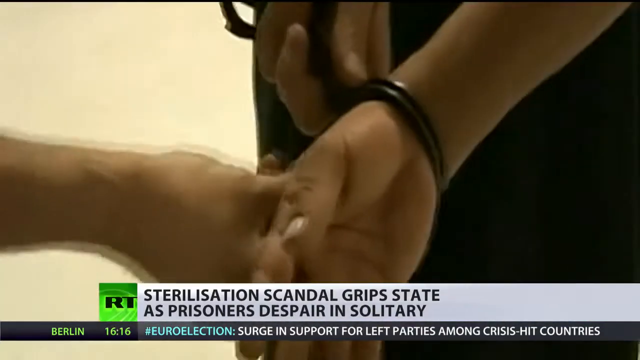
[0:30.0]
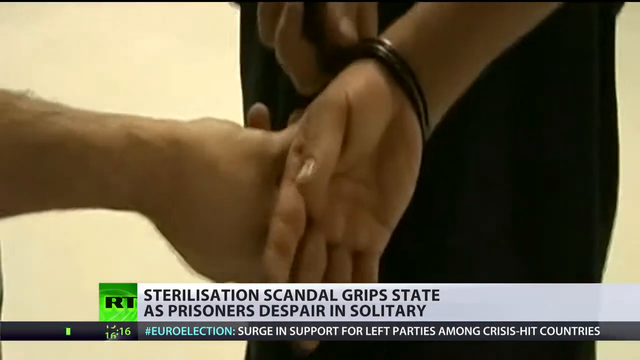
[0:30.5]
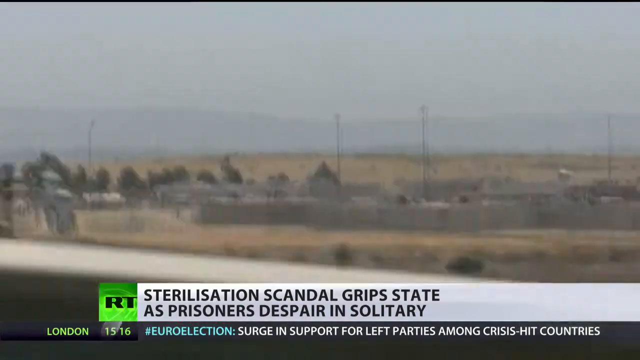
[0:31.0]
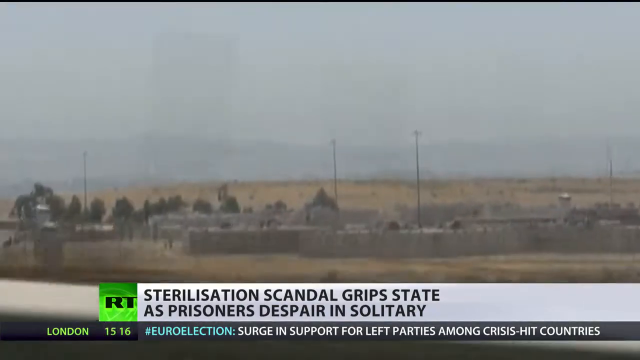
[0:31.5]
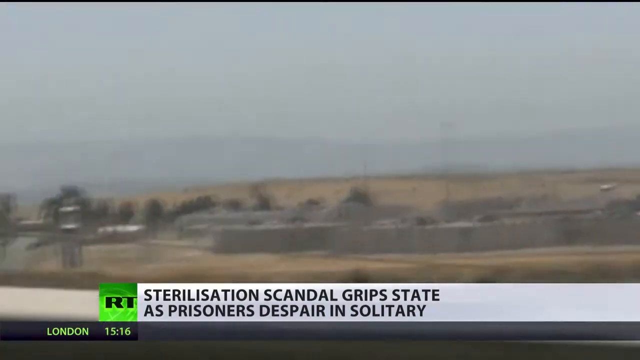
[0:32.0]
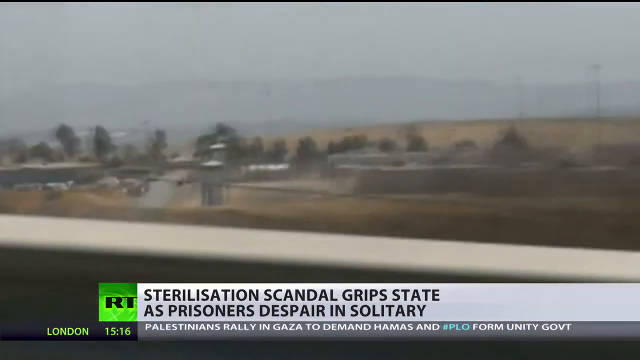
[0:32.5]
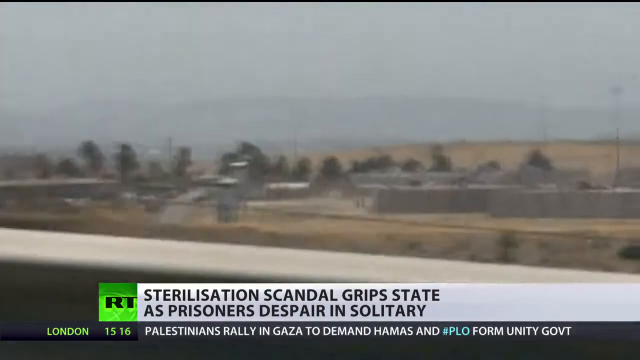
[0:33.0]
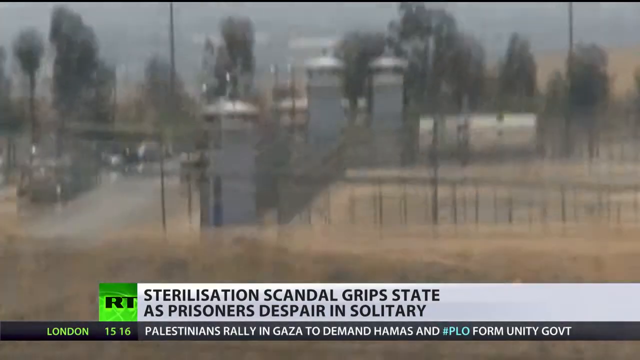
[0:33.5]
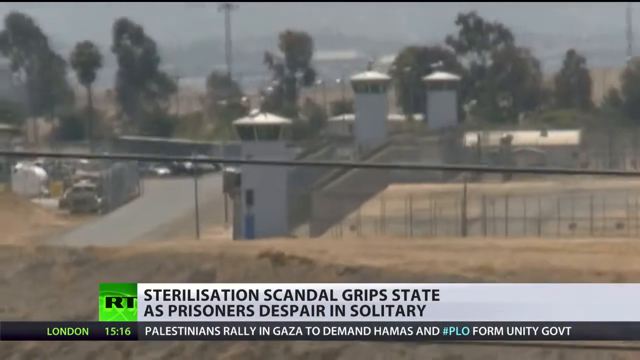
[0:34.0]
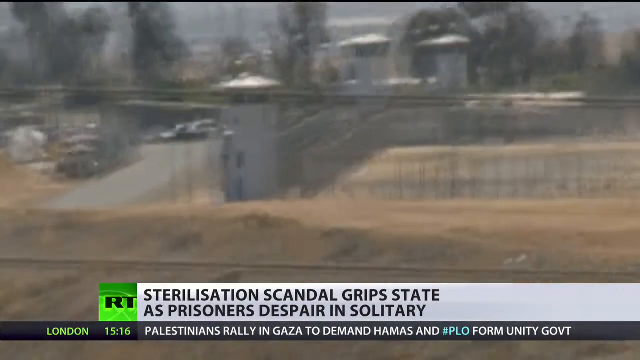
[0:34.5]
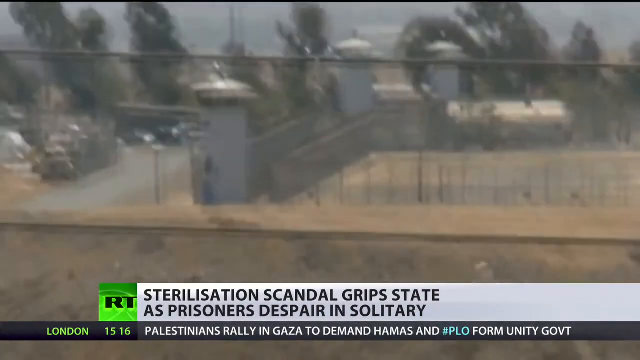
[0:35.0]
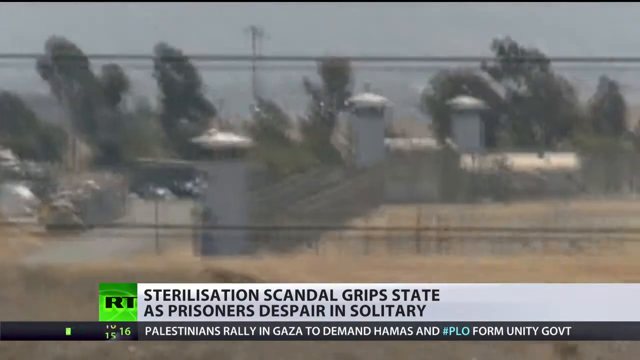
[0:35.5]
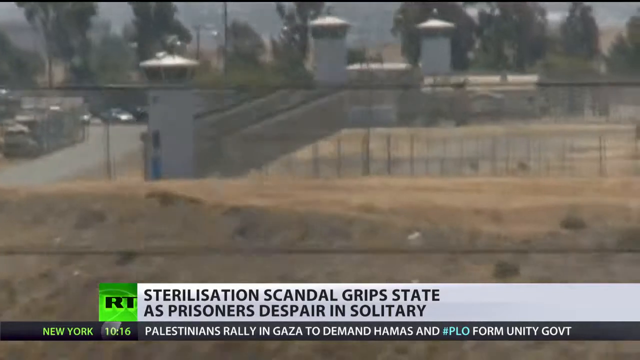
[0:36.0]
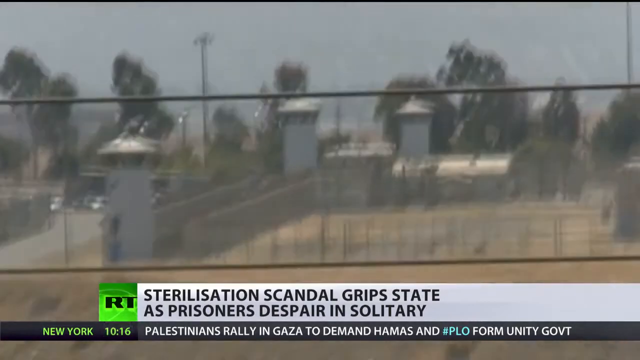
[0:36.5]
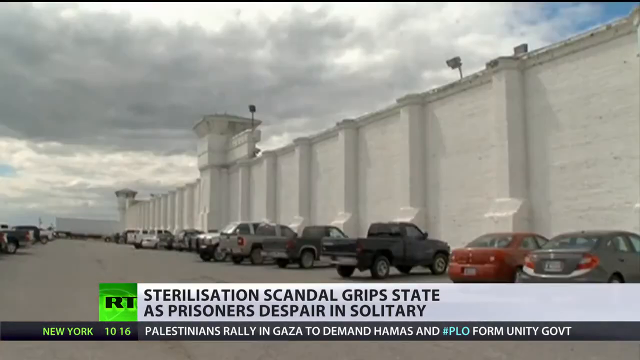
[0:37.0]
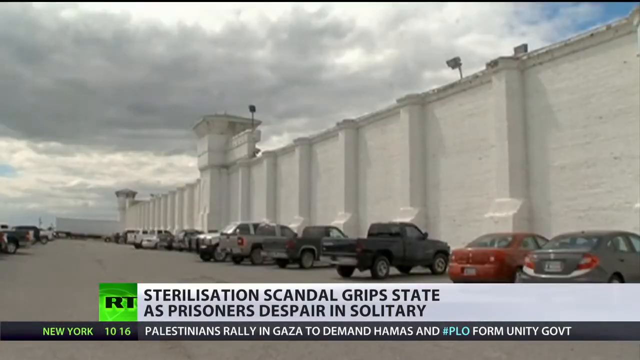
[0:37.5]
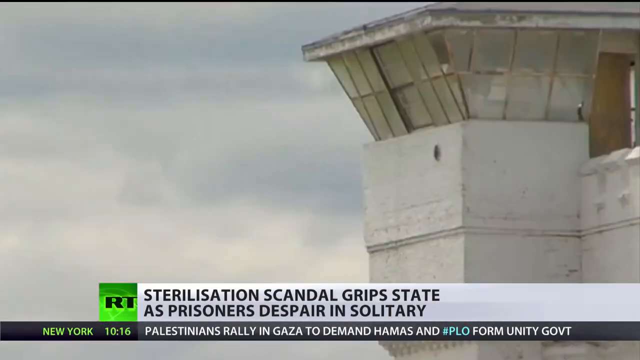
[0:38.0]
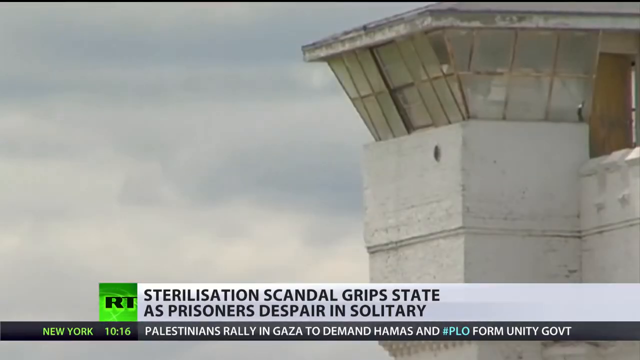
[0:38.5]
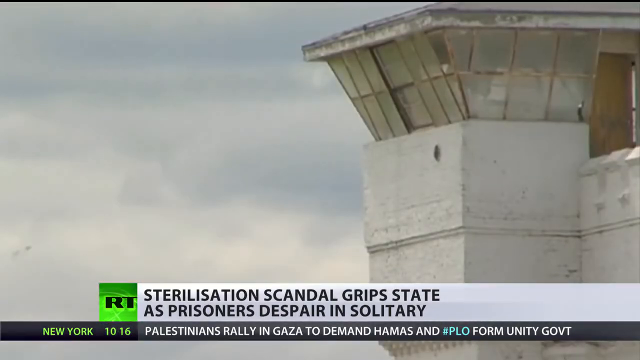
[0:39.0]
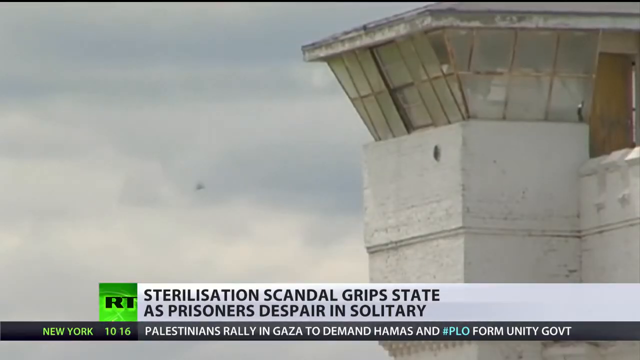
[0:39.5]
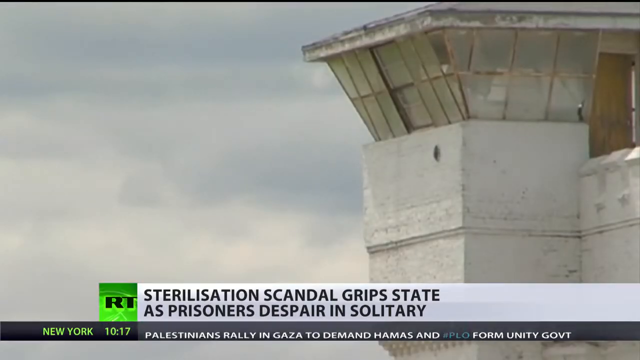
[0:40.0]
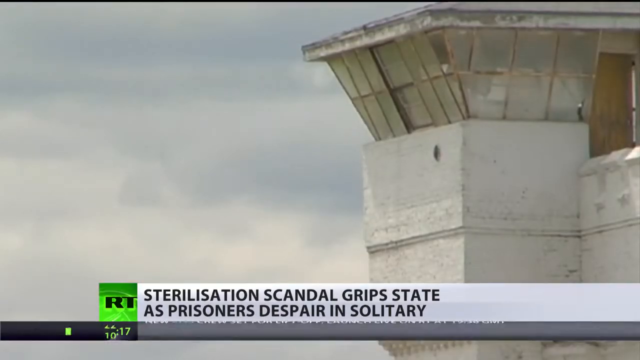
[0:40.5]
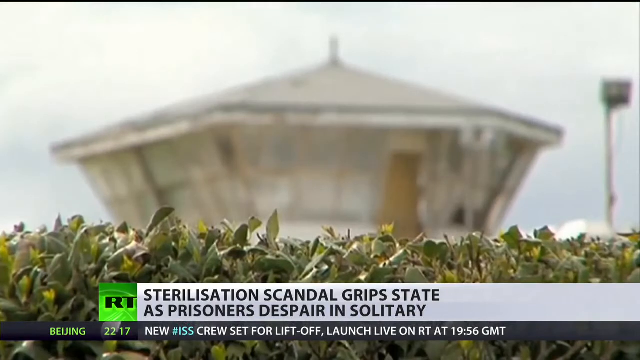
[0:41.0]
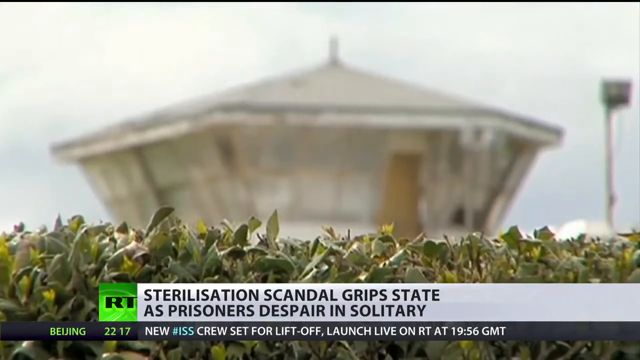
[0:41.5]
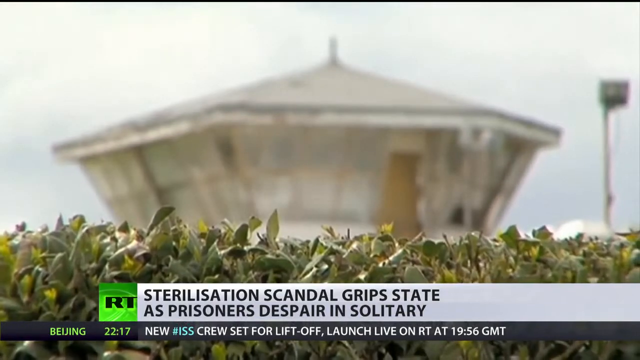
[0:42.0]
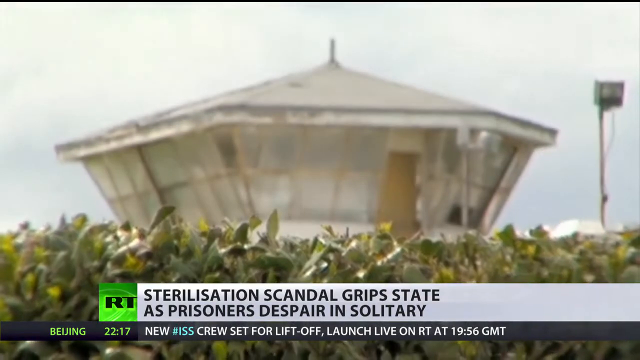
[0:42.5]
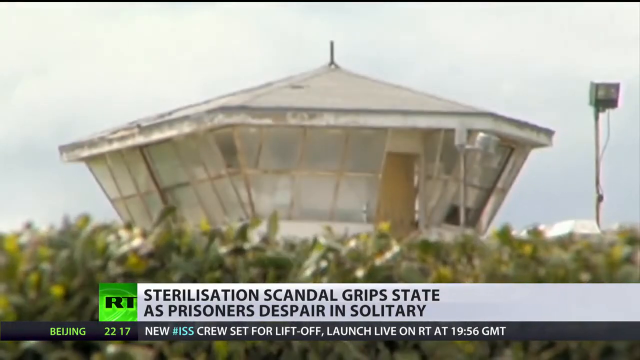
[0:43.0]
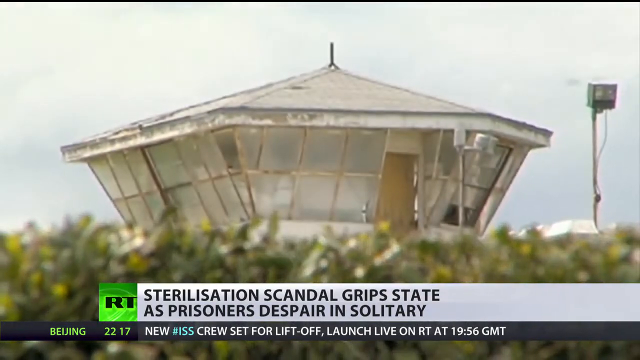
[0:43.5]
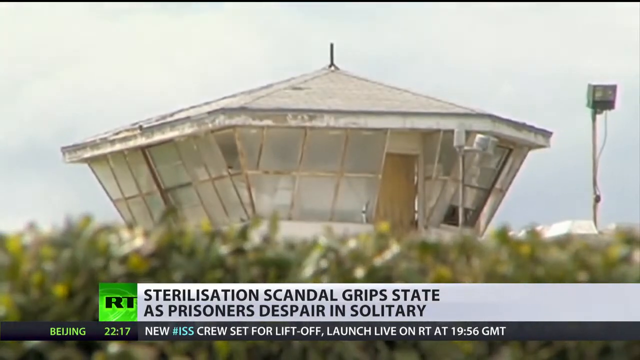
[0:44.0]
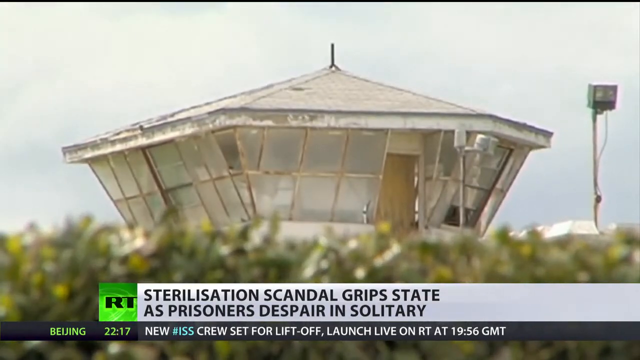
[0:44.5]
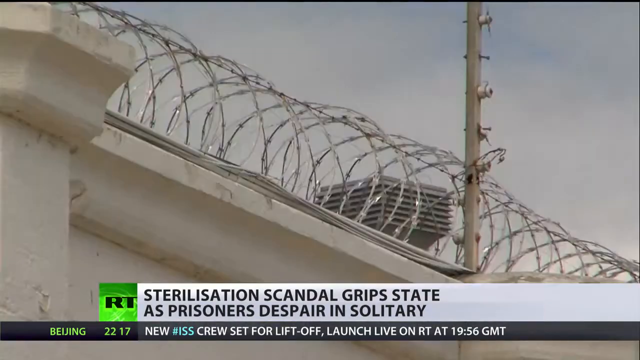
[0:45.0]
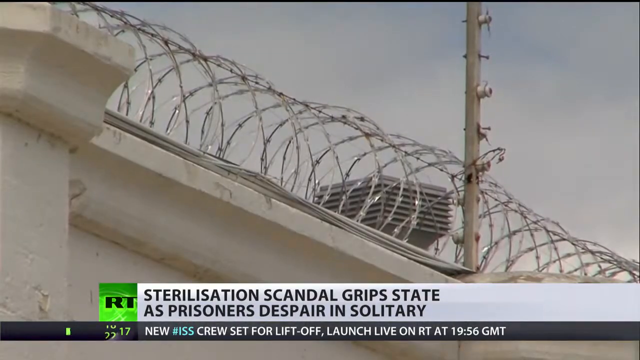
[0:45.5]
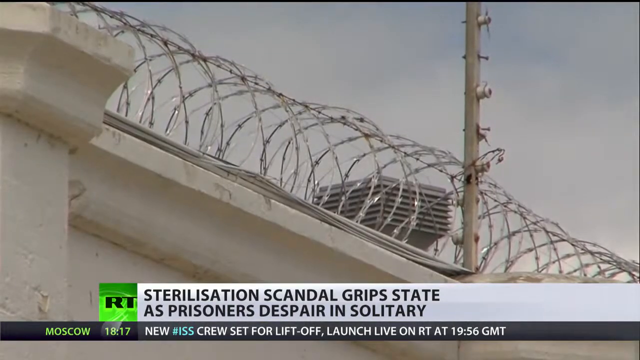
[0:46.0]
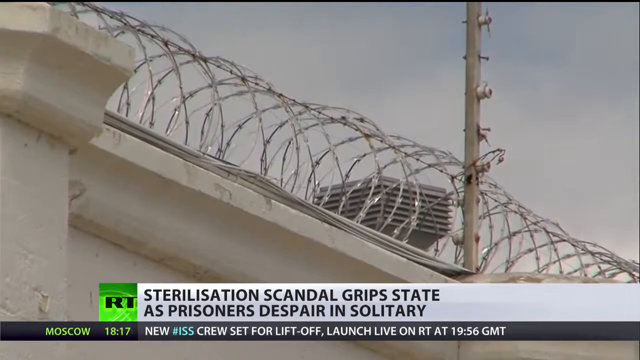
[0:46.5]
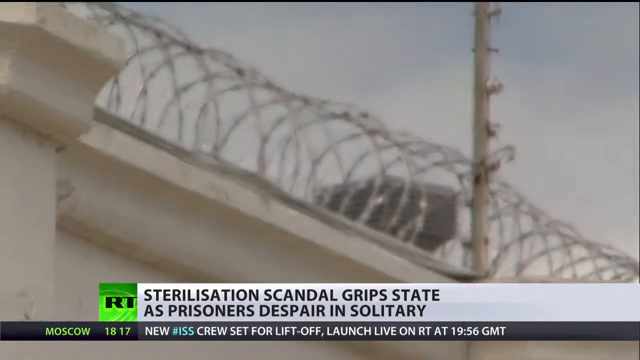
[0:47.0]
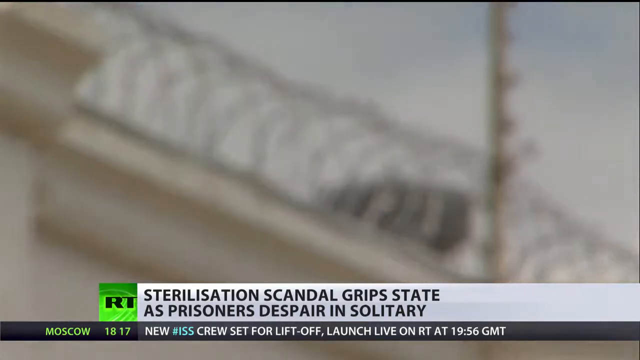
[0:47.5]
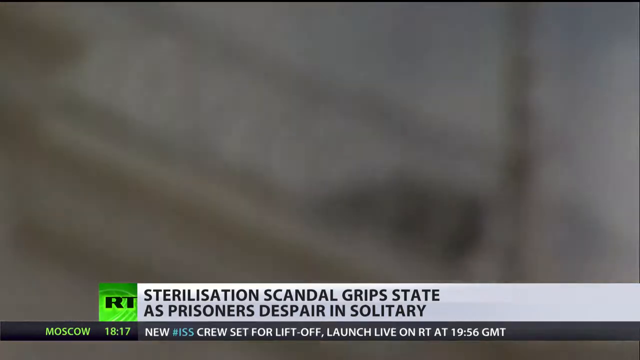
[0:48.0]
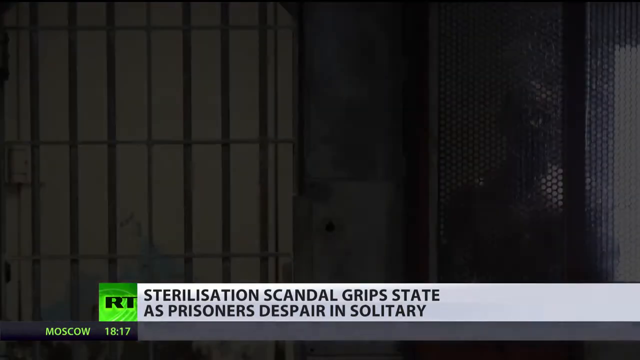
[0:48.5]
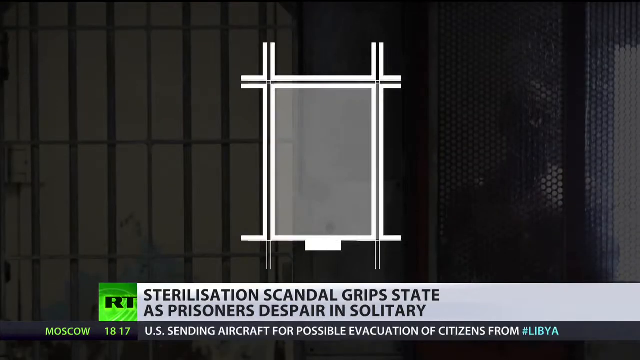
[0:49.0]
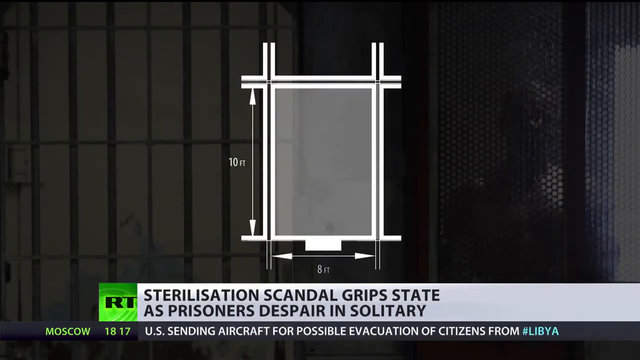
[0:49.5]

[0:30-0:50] Some men in handcuffs are shown with "sterilization scandal grips state as prisoners despair in solitary" at the bottom, and someone appears to be dealing with handcuffs. A somewhat shaky view, apparently out of a car window, shows a prison from different angles as if driving by. The camera then pans into the prison parking lot, where many cars are parked along with about three or four trucks. The tall prison walls look like white brick. A guard tower appears as the title pops back up at the bottom. The white tower has some windows and looks very old, and it is shown from different views. Next the barbed wire fence is shown; the camera focuses in and the image gets blurry, followed by a window with dimensions.